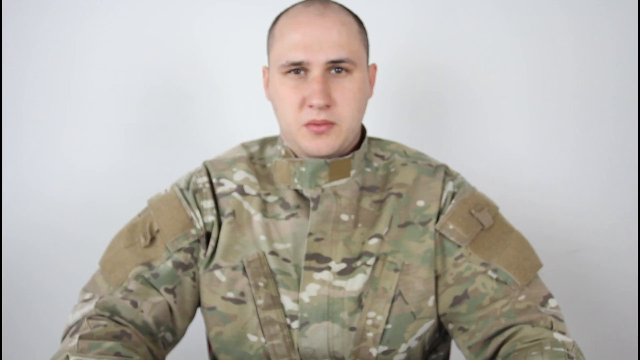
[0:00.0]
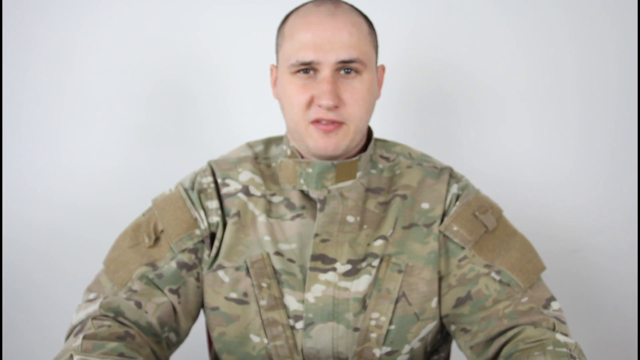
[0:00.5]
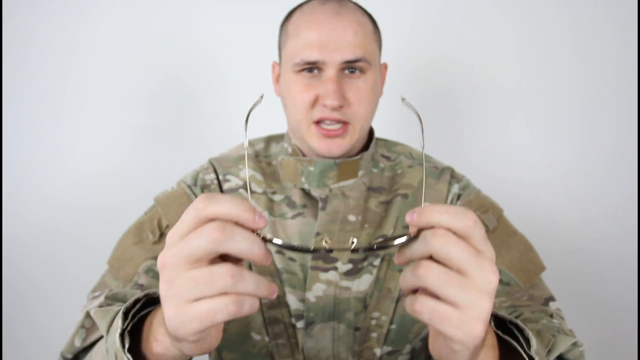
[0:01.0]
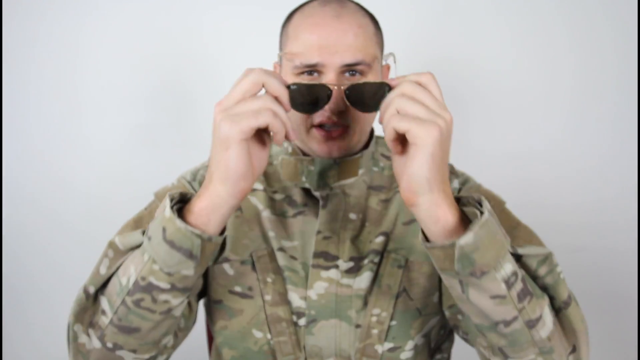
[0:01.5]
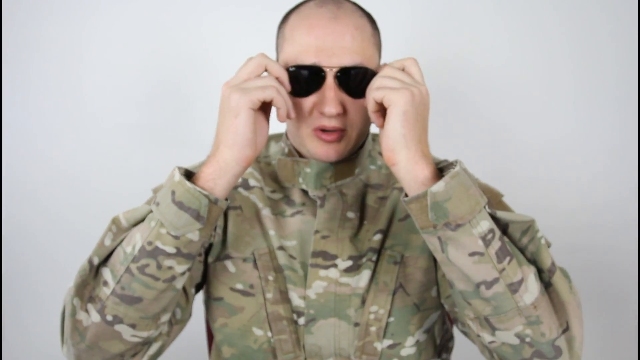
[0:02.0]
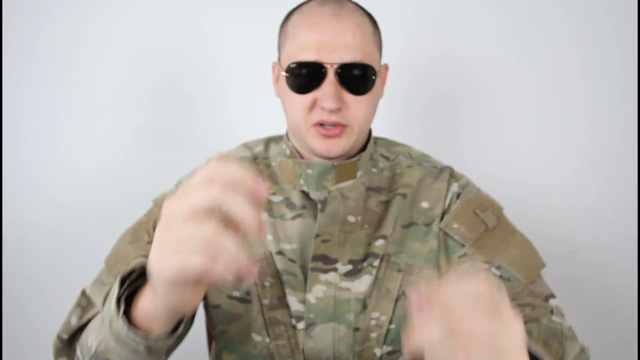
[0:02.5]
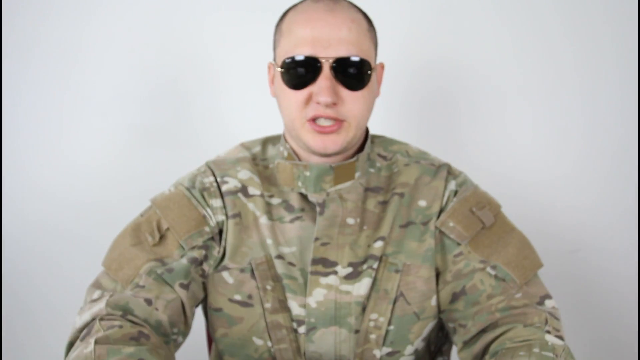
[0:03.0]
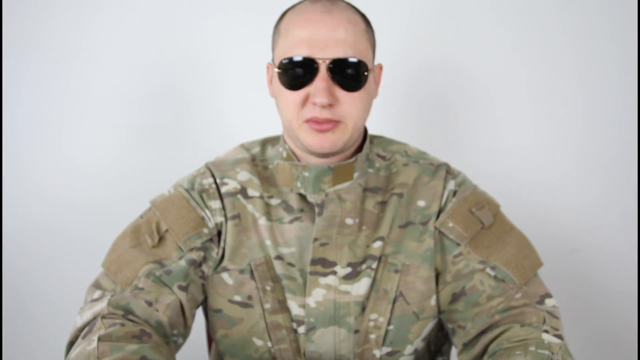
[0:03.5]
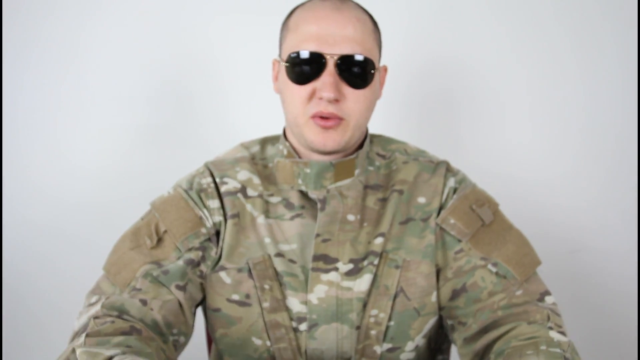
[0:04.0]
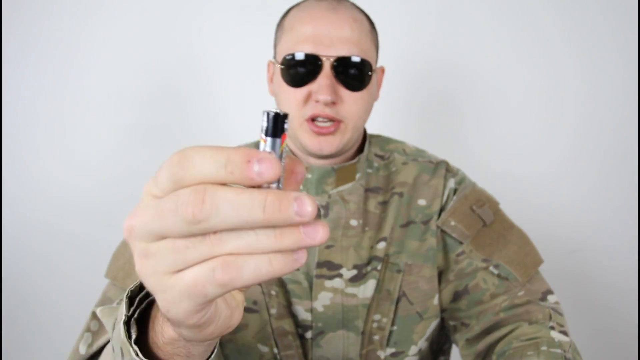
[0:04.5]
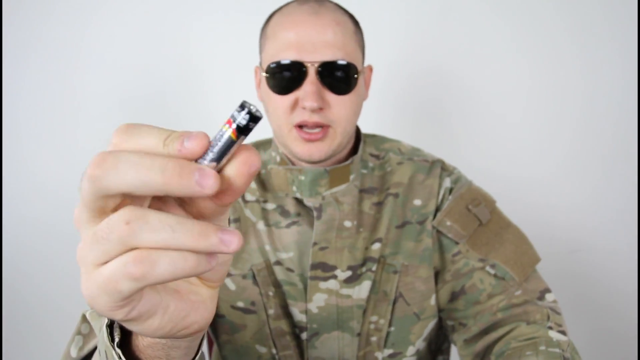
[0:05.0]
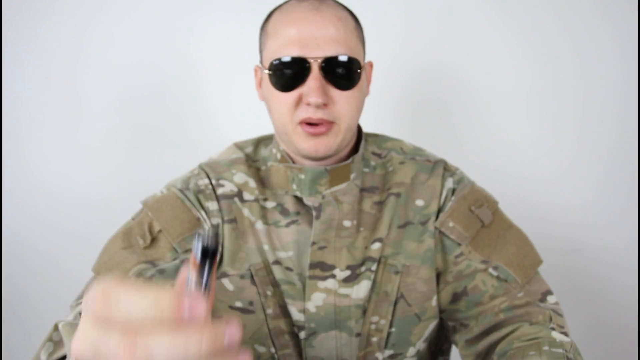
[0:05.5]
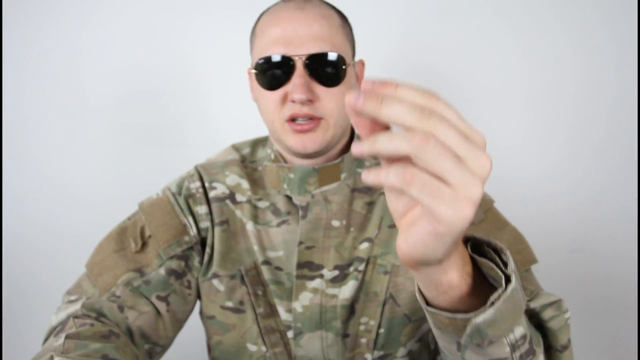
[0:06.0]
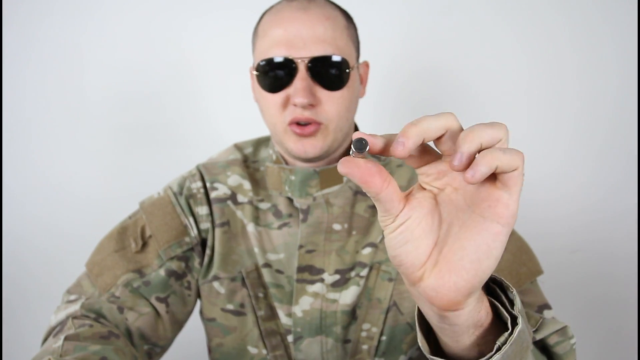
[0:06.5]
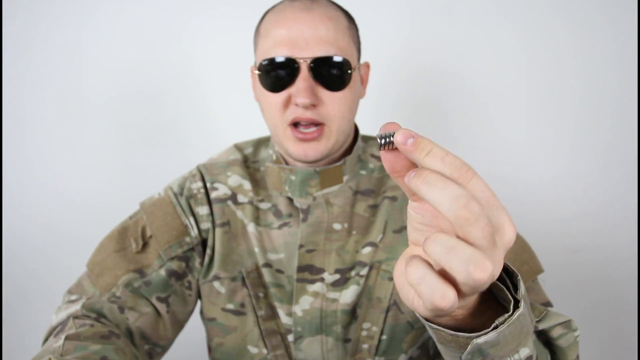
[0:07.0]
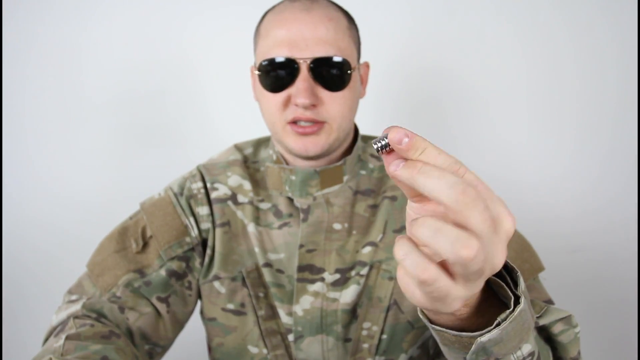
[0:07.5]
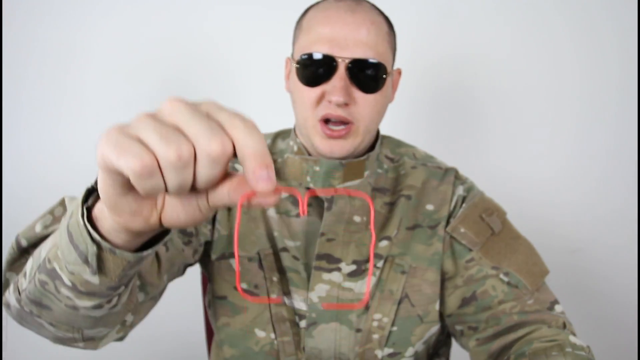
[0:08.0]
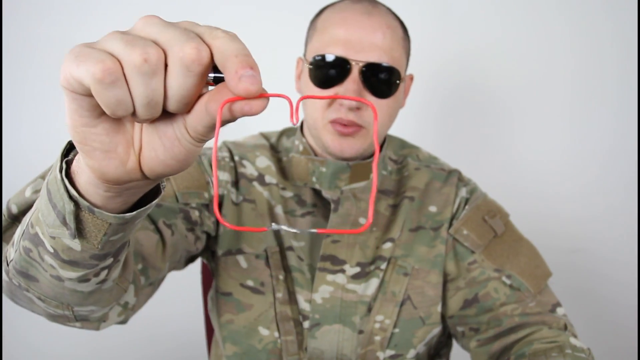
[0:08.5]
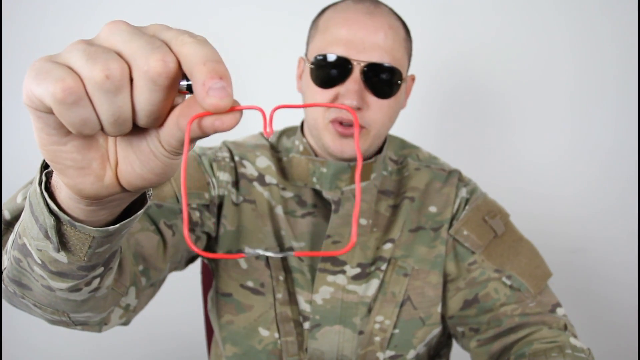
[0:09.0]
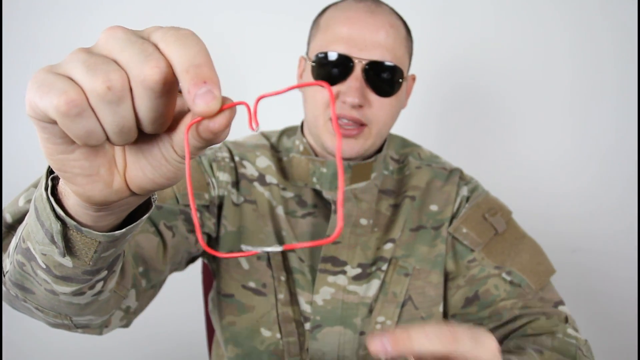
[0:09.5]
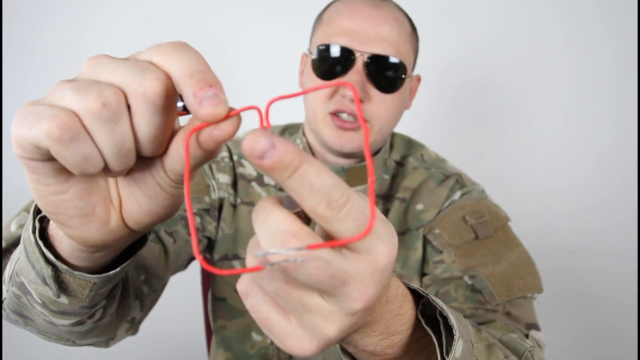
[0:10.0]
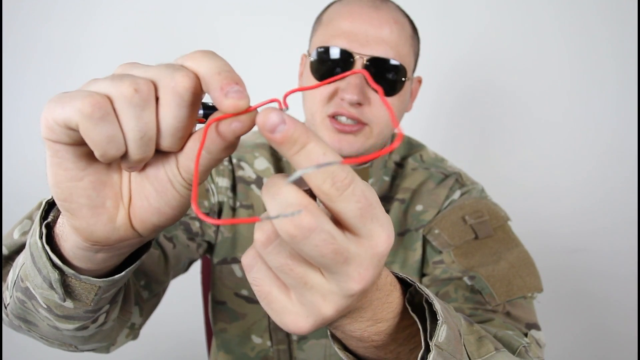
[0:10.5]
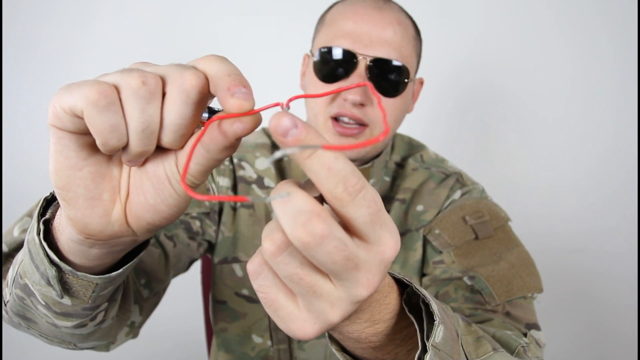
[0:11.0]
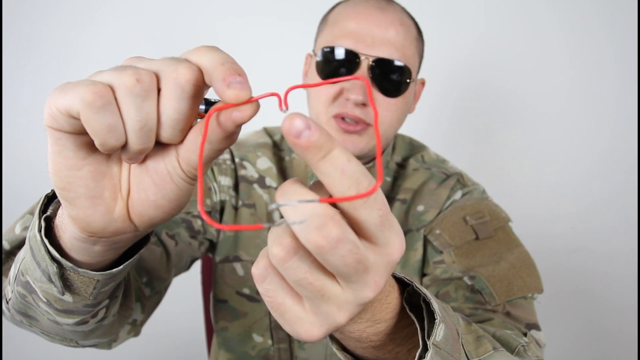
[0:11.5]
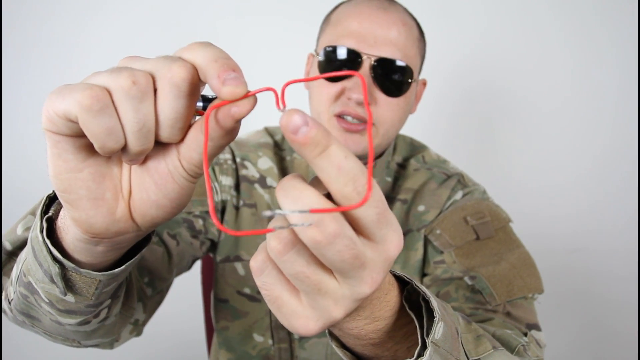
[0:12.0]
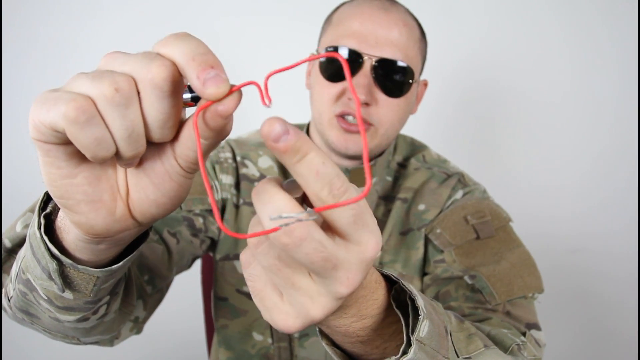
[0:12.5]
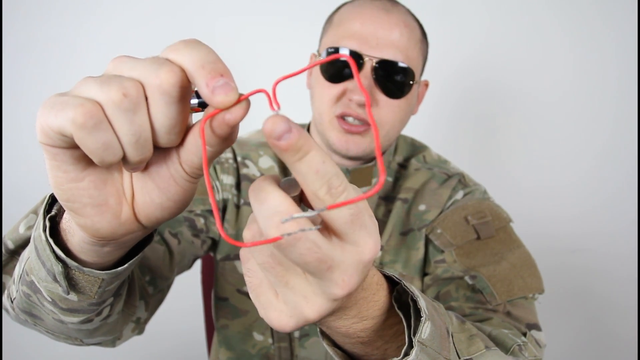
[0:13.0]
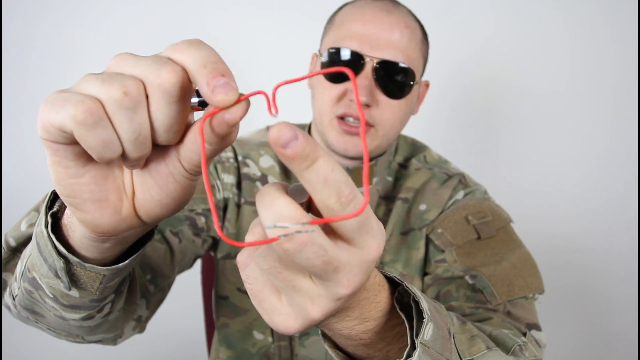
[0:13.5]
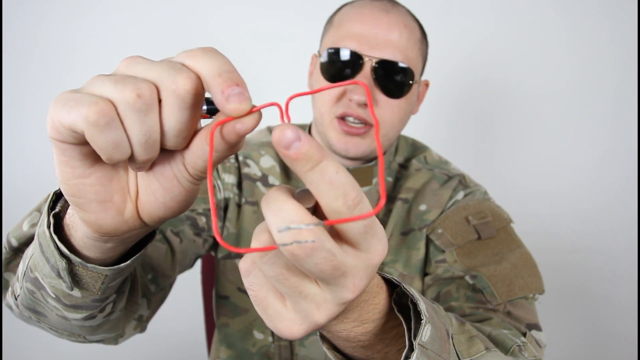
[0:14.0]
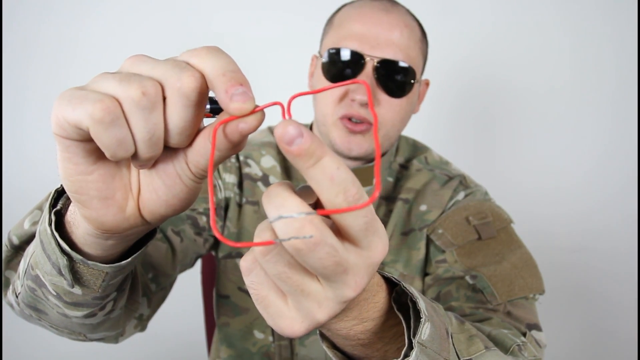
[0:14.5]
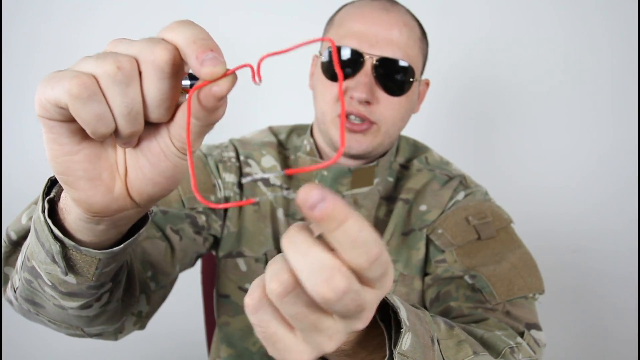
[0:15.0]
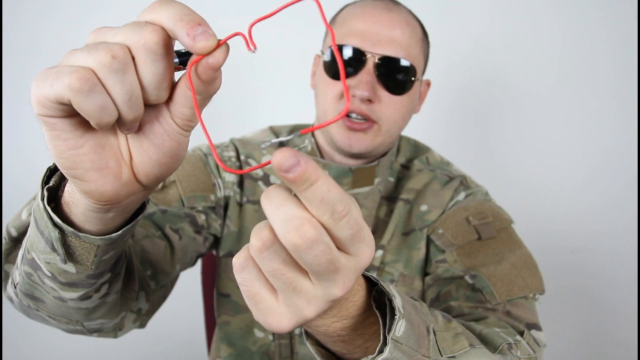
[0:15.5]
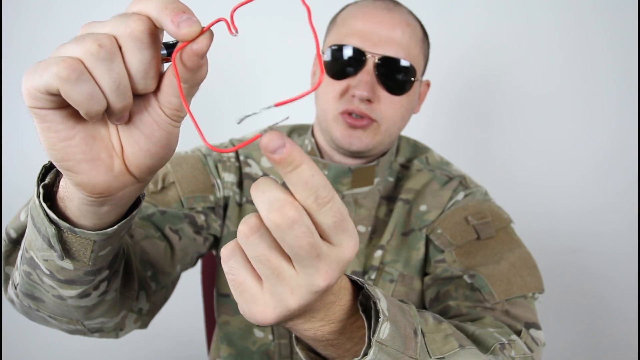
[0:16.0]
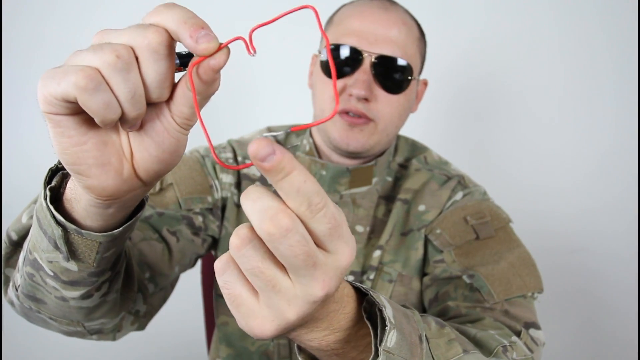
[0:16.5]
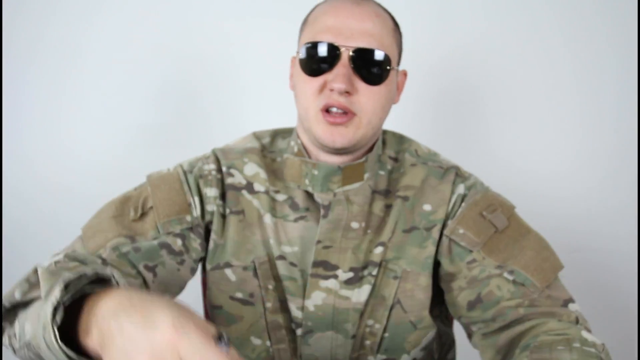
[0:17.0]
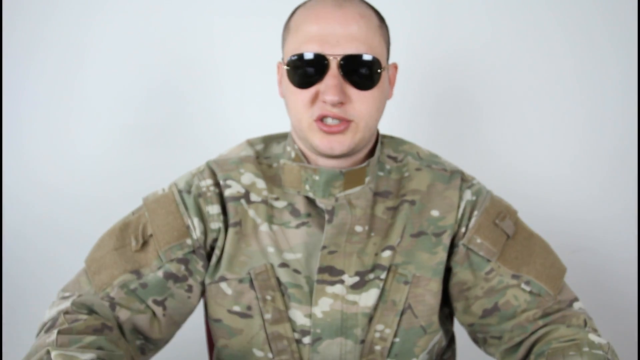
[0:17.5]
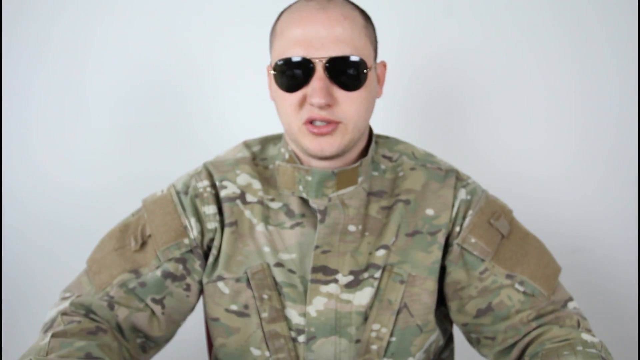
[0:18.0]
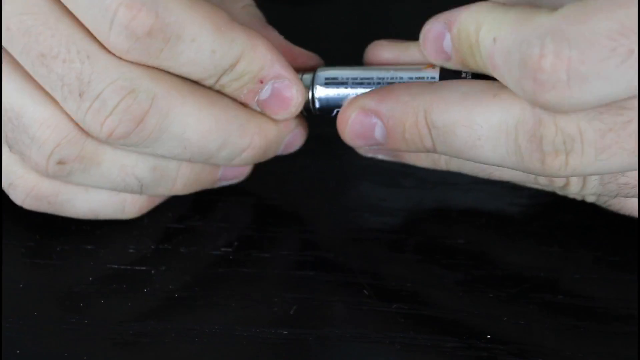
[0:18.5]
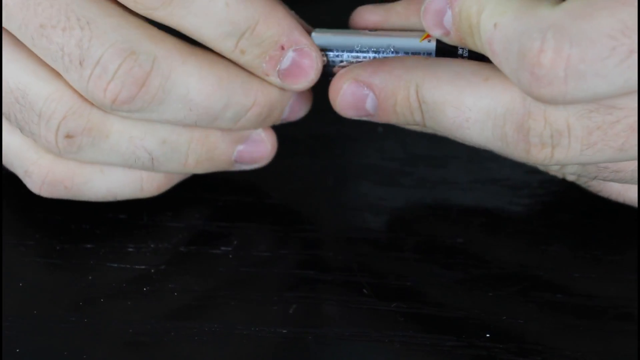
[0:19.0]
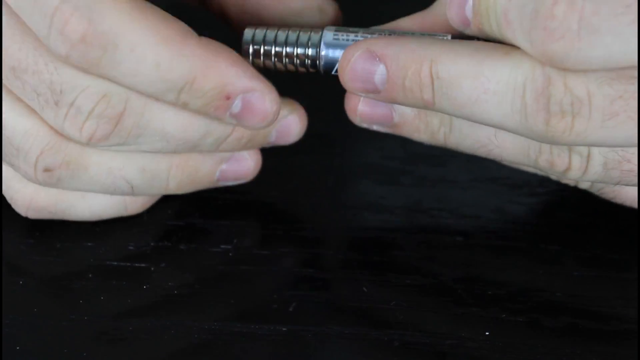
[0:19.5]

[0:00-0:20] A man wearing camouflage, like army fatigues, is seen from about his chest up to the top of his head against a white background. He grips a pair of sunglasses, holding each end with each hand, and puts them on; they are kind of like aviator glasses with black lenses. He has a shaved head. He then picks up what looks like a battery: in his right hand is what looks like an Energizer battery, and in his left hand he picks up a small cylindrical battery that is silver or stainless steel. He also has a red, square-shaped wire with a divot in the center that is open on the bottom end. Briefly, a close-up shows his hands as he handles the Energizer battery.